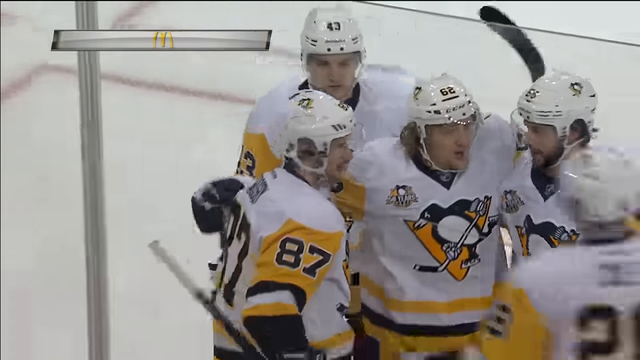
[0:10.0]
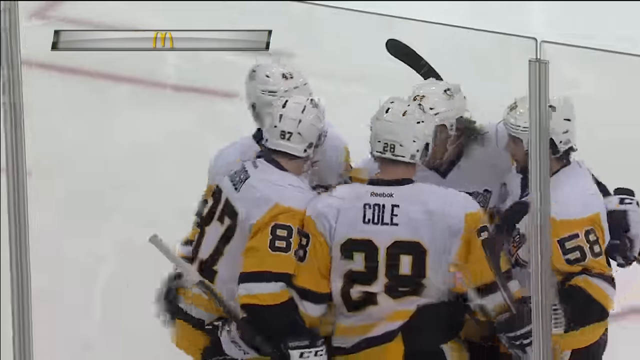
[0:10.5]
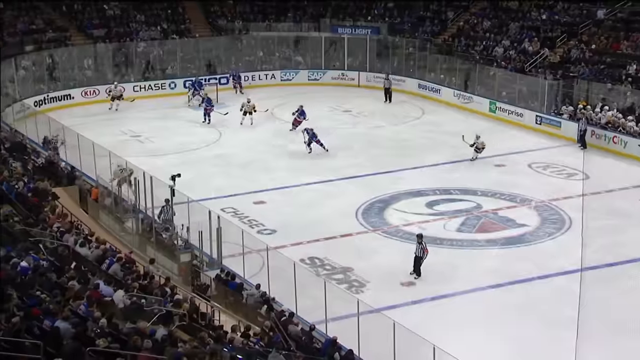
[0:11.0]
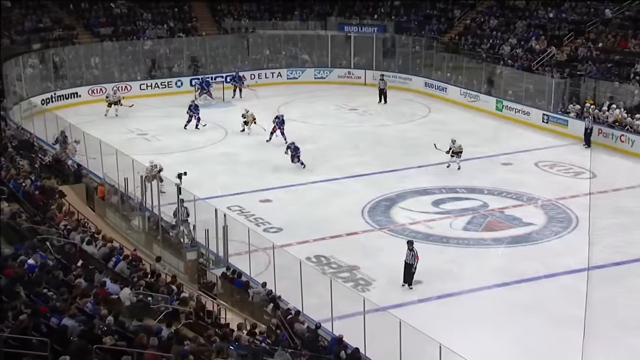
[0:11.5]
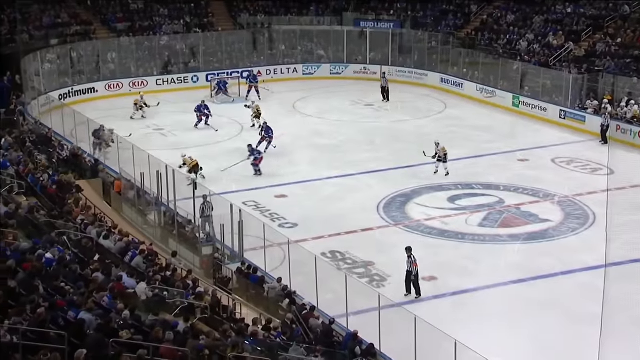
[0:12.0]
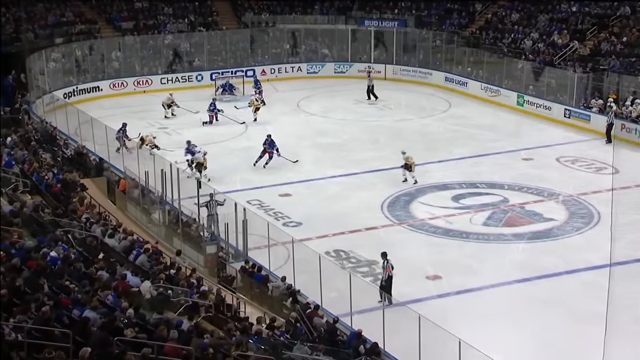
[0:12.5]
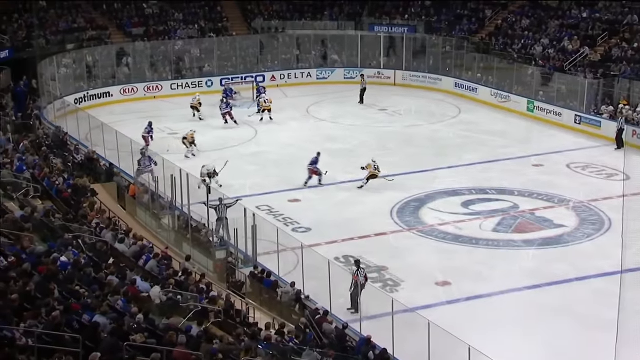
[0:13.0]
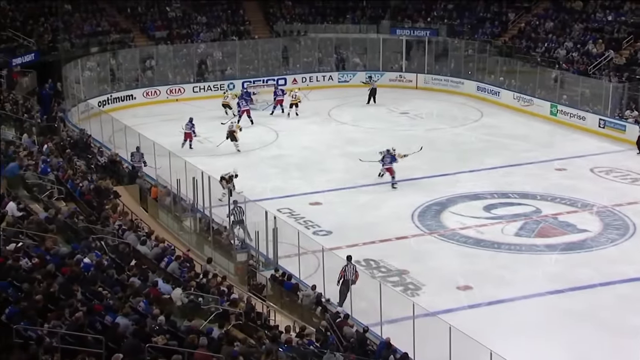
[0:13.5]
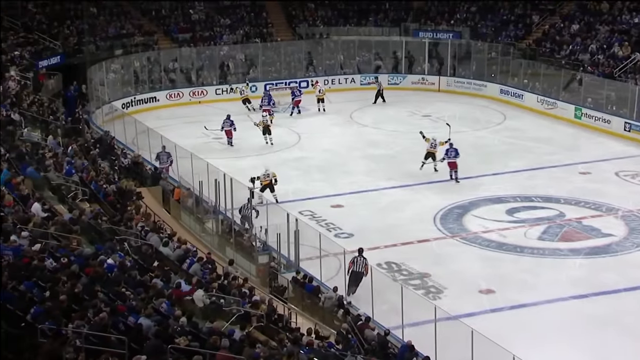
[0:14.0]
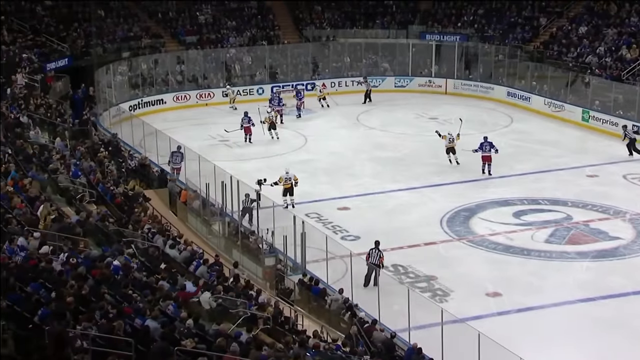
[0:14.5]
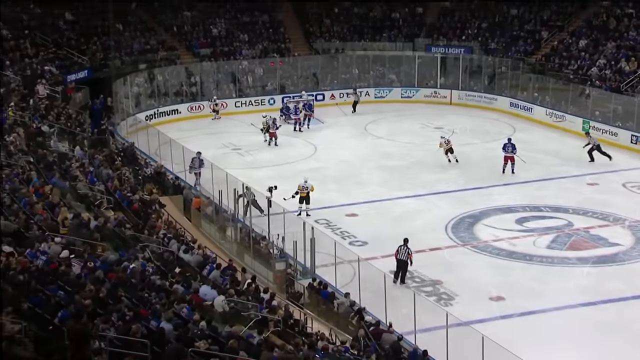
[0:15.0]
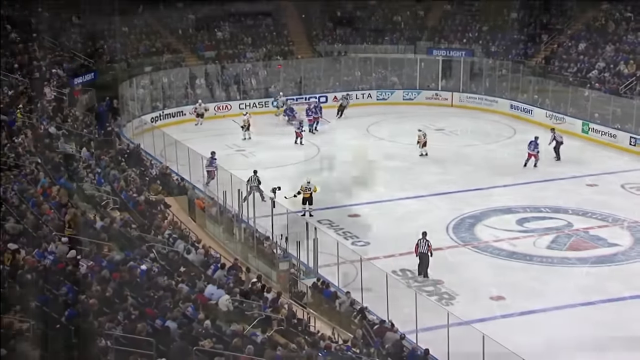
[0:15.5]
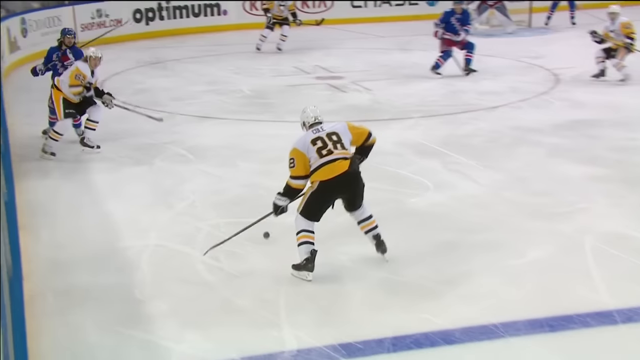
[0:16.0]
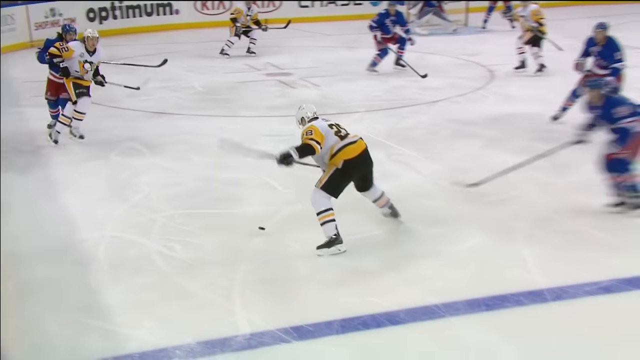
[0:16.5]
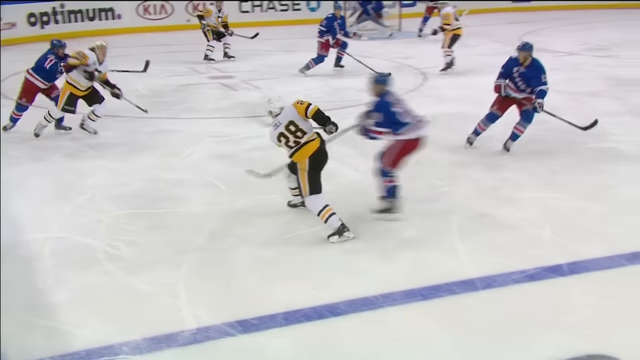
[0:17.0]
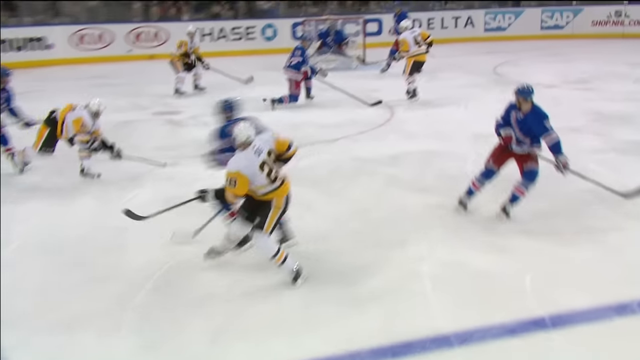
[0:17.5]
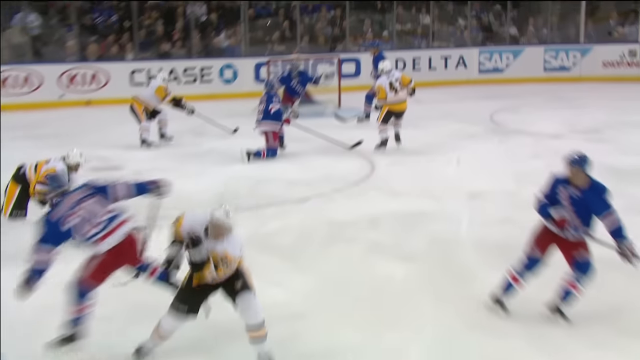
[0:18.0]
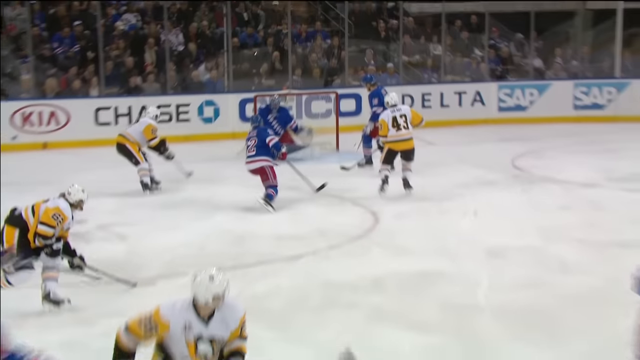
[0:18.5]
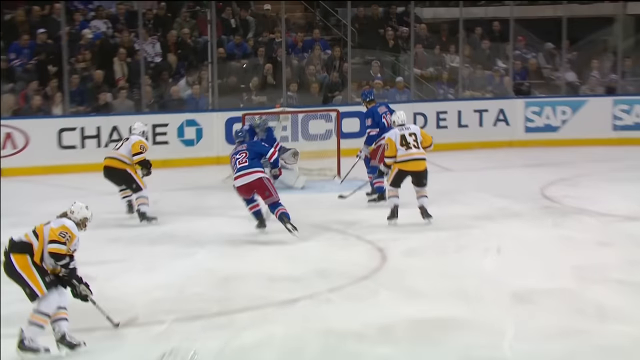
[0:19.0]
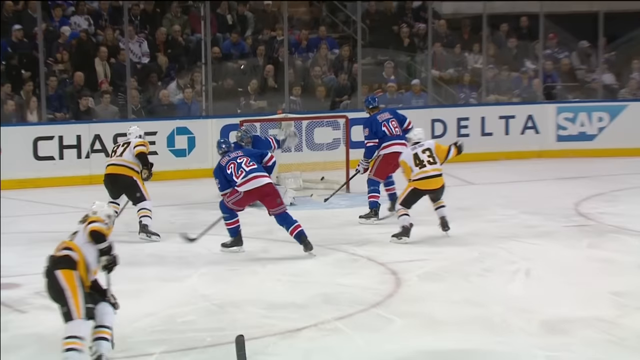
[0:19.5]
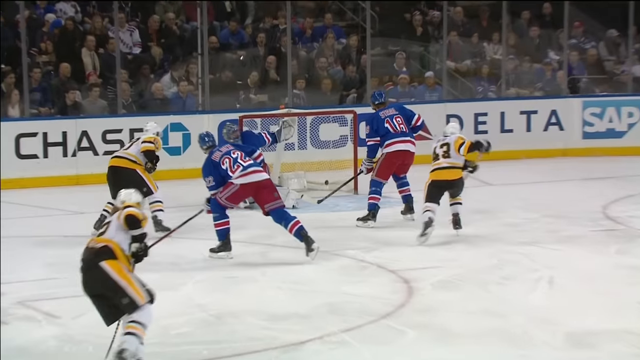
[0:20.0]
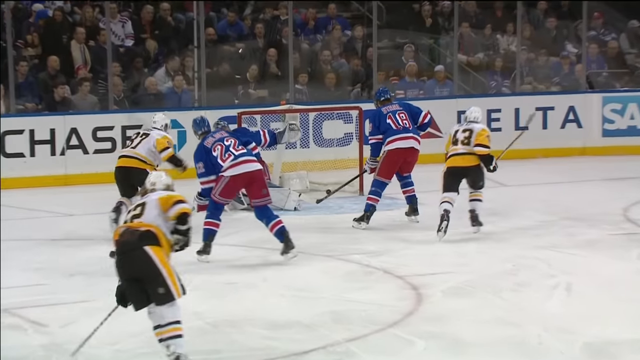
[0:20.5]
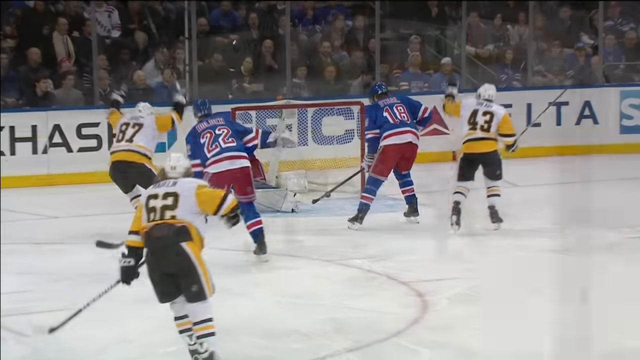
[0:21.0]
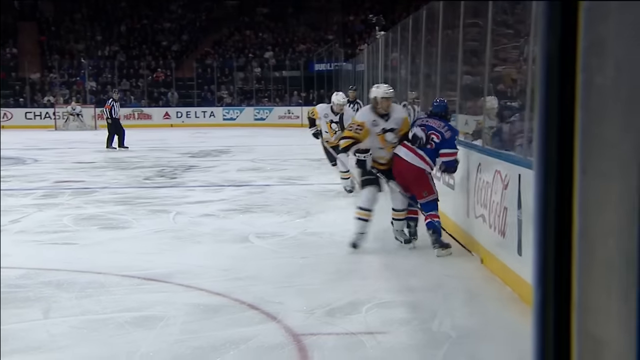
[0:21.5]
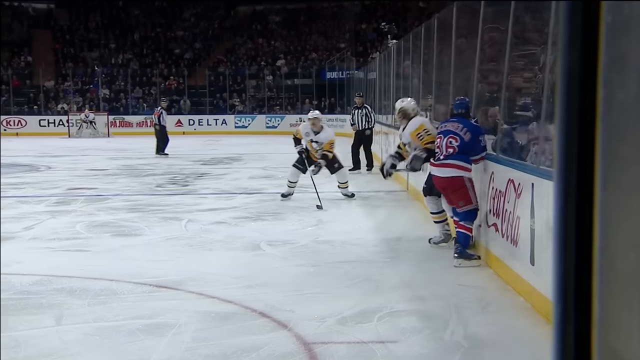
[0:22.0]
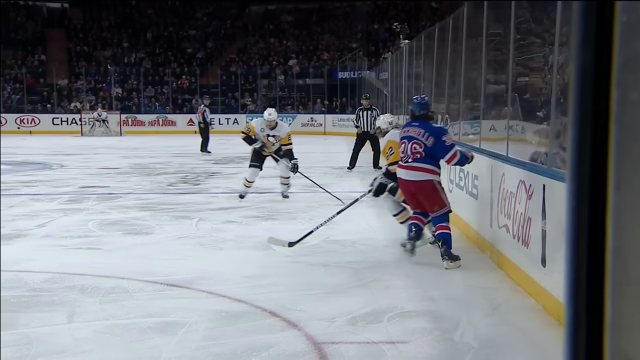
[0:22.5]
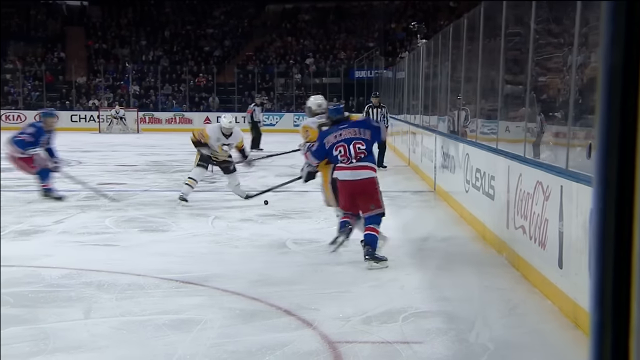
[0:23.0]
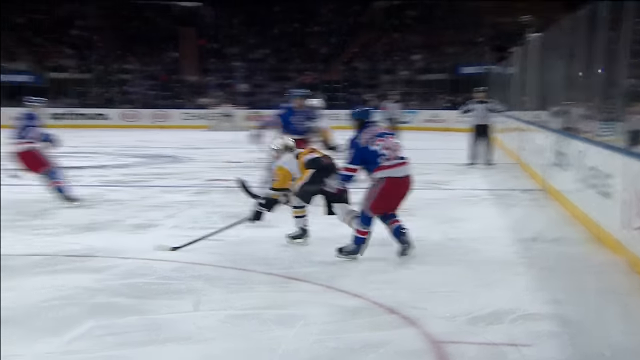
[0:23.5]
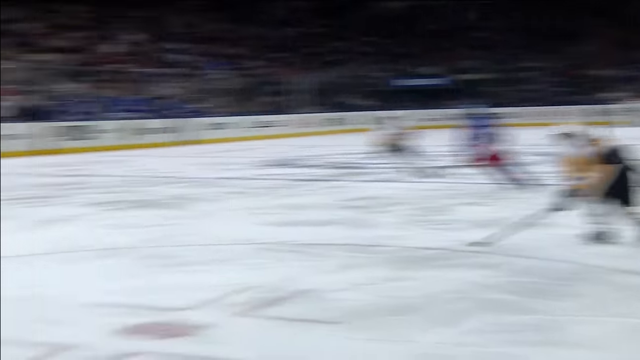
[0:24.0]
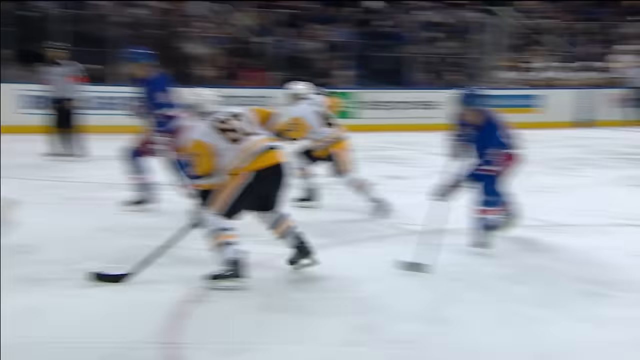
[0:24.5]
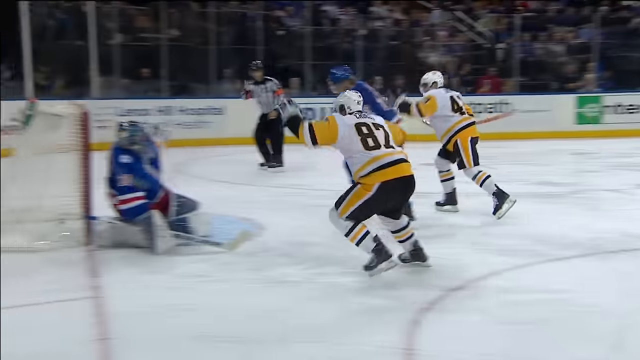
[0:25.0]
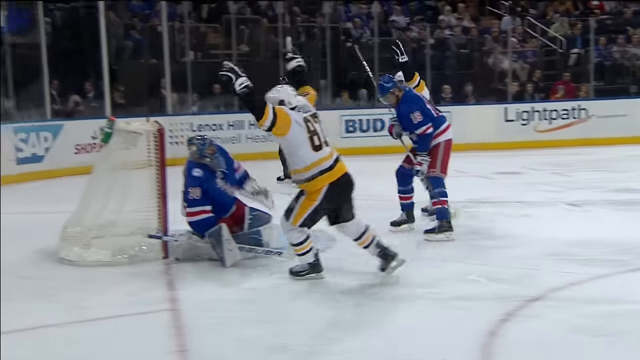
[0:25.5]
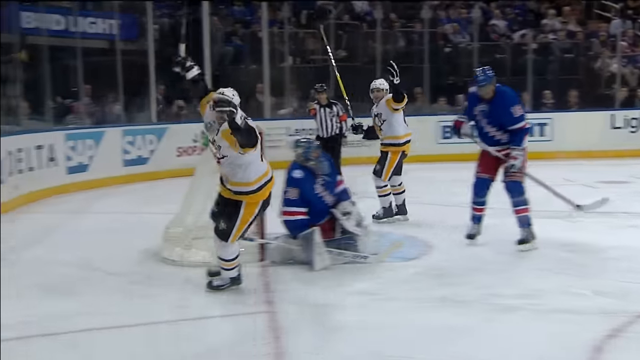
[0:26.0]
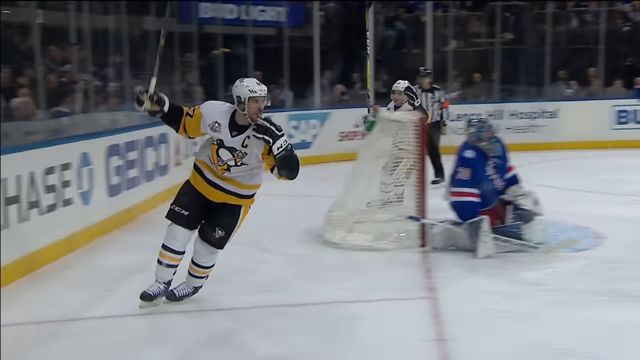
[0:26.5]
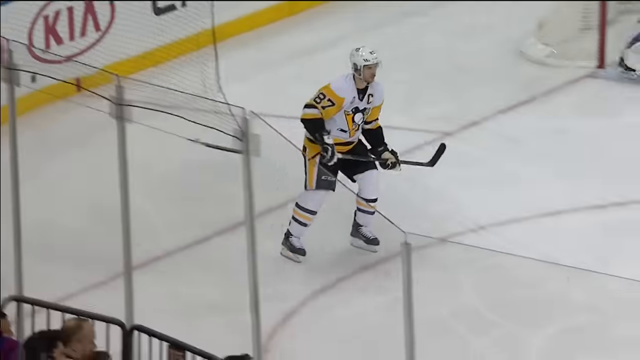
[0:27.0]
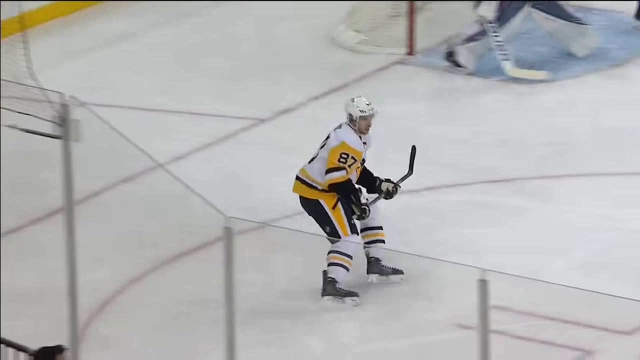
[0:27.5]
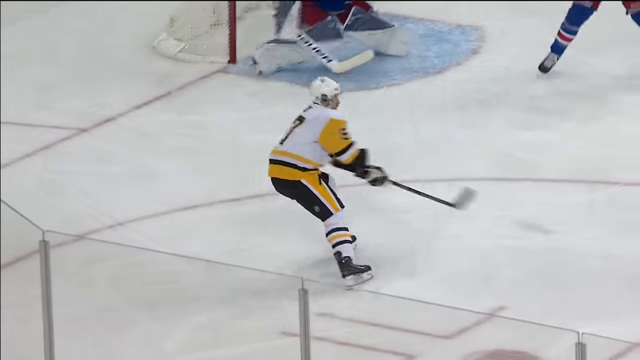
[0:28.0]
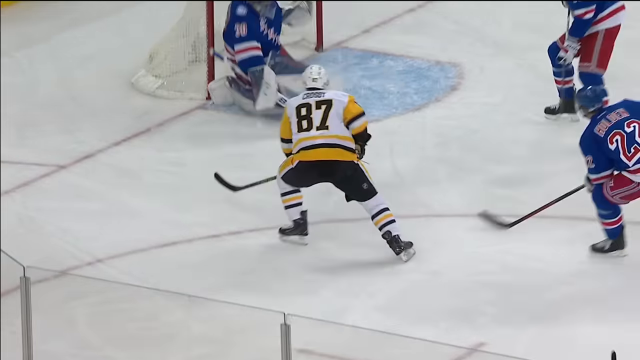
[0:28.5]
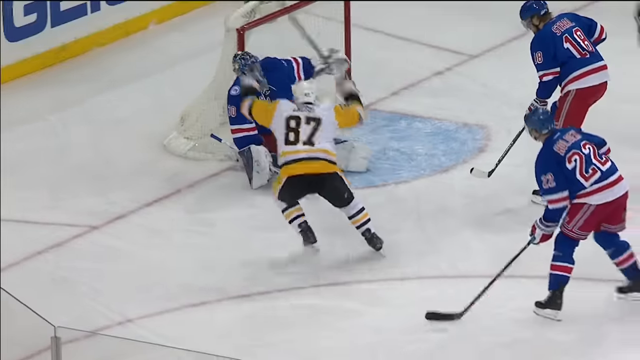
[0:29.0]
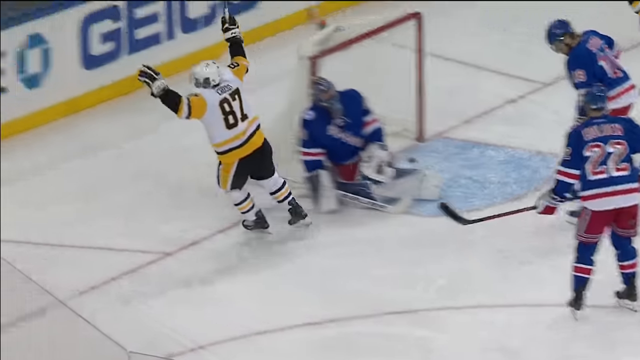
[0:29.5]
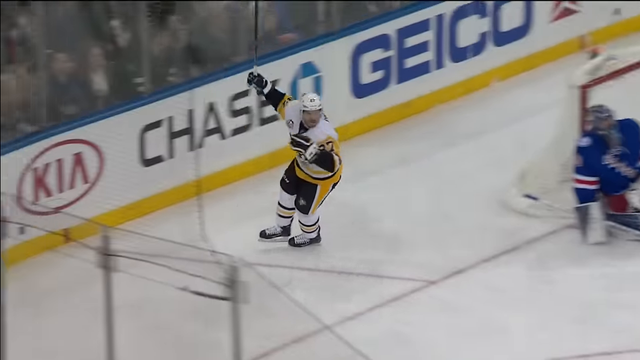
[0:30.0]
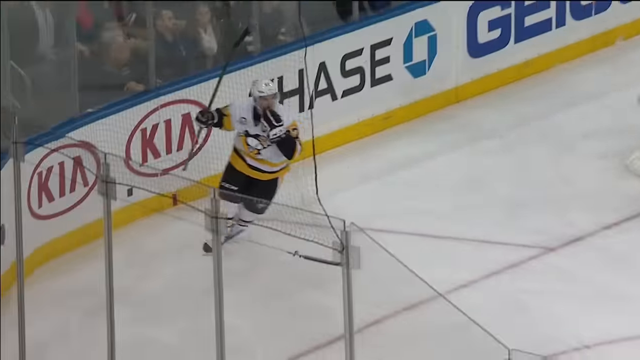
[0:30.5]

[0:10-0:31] An instant replay of the goal is shown, zoomed out so that all the players on the ice are visible at once. Various sponsors appear at the ice rink, including Geico, Delta, and Enterprise. The replay shows the shot coming from the top left of the Rangers' side of the ice, near the blue line. The shot goes right by the left glove of the goalkeeper and into the back of the net. As soon as the goal is scored, the Penguins players react by throwing their hands up into the air. A zoomed-in replay then shows number 28 hitting a one-timer right past the glove of the goalkeeper and into the back of the net. Another replay angle shows a Rangers player being checked into the boards right before the one-timer is shot and scored by the Penguins player. Yet another replay shows that number 87, Sidney Crosby, might have actually gotten his stick on the puck for a deflection goal.